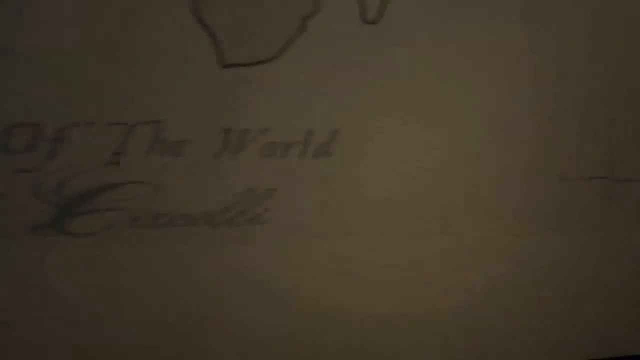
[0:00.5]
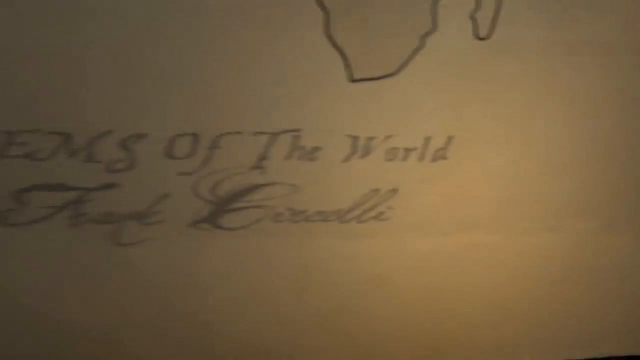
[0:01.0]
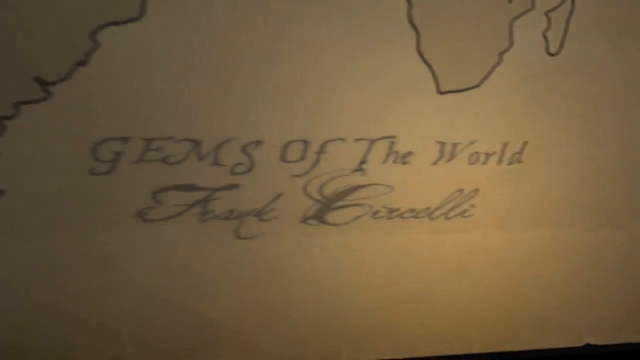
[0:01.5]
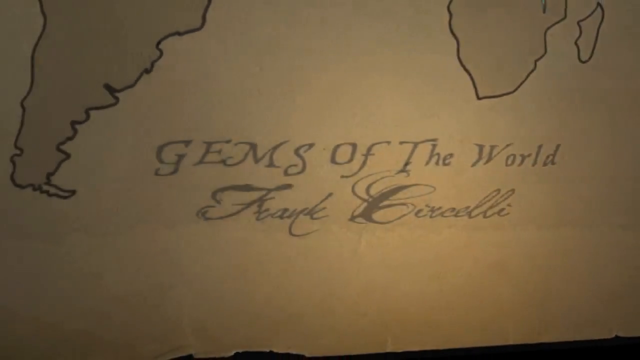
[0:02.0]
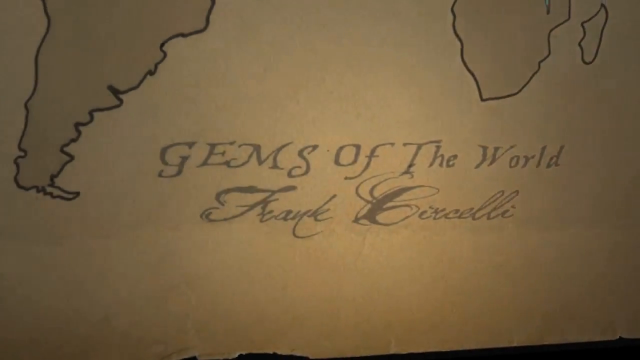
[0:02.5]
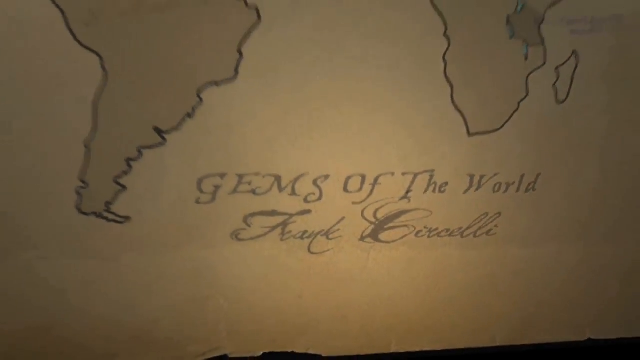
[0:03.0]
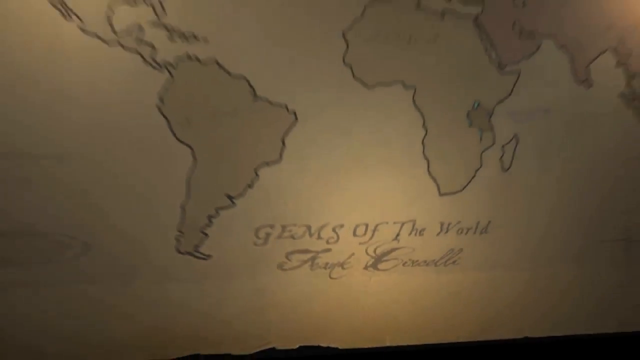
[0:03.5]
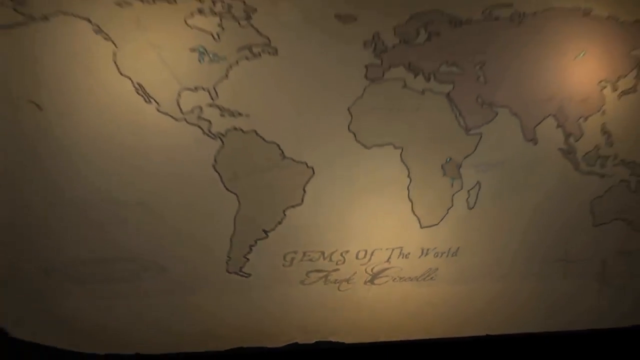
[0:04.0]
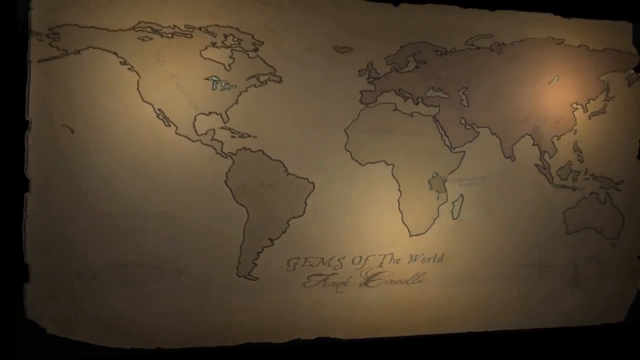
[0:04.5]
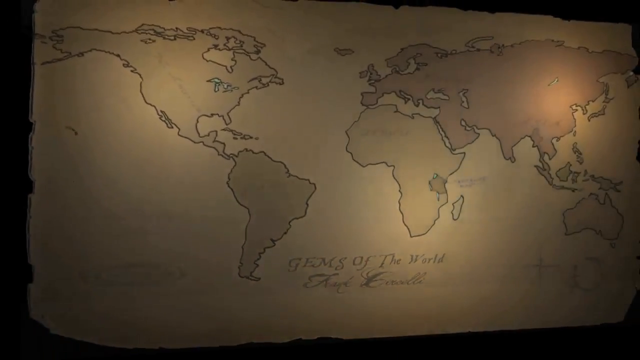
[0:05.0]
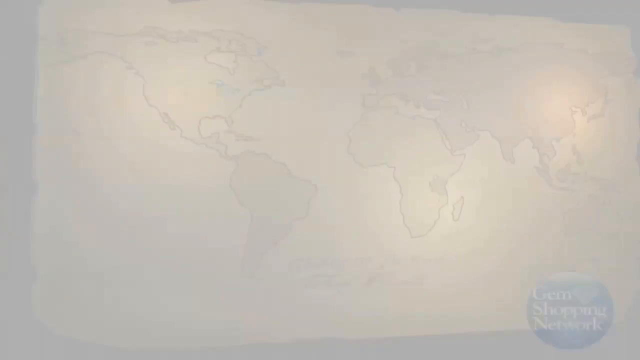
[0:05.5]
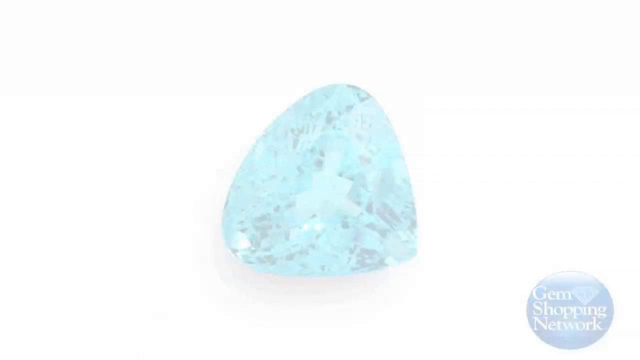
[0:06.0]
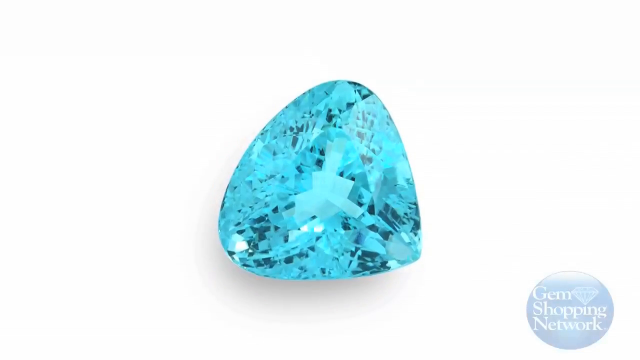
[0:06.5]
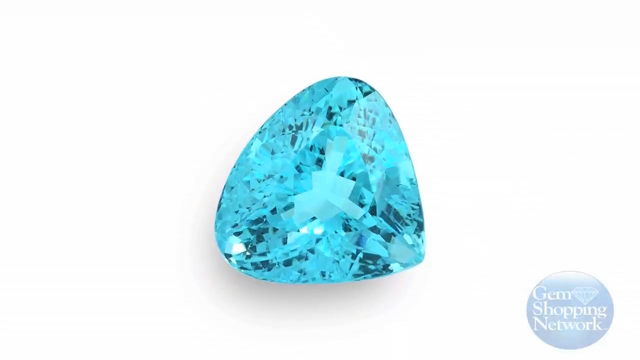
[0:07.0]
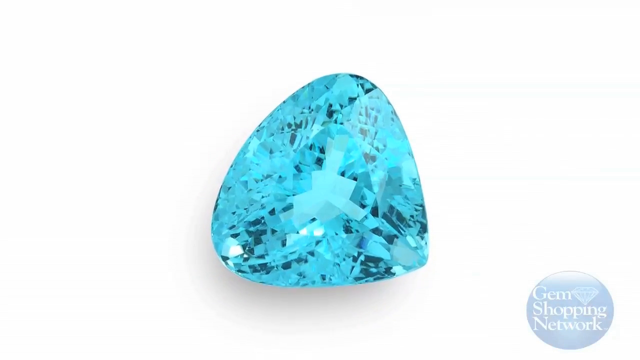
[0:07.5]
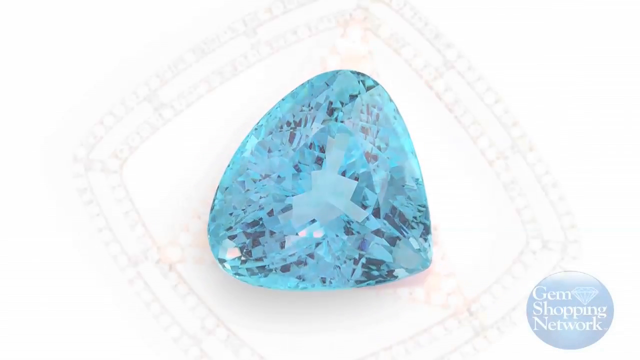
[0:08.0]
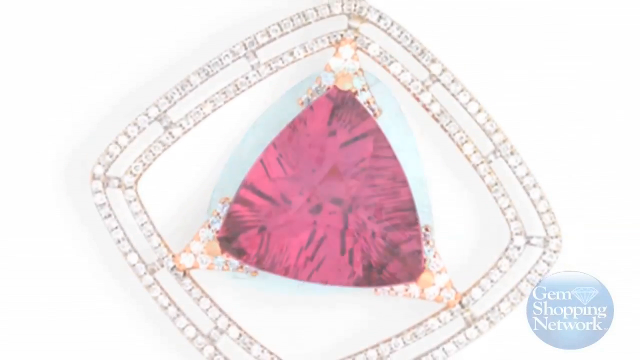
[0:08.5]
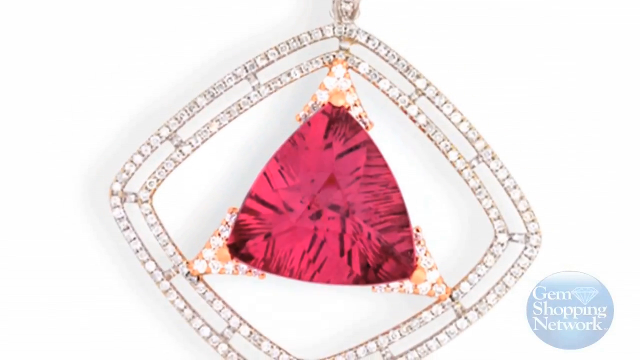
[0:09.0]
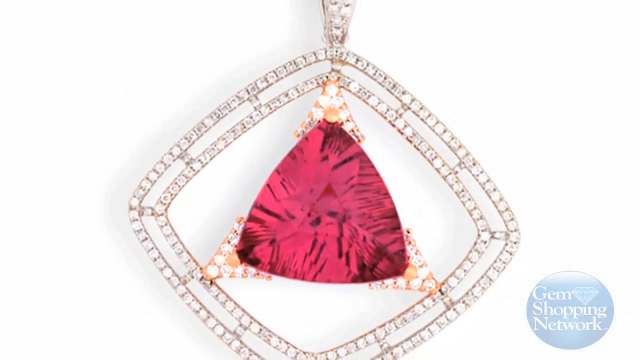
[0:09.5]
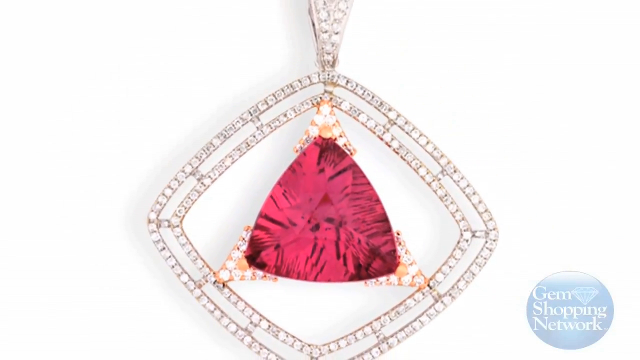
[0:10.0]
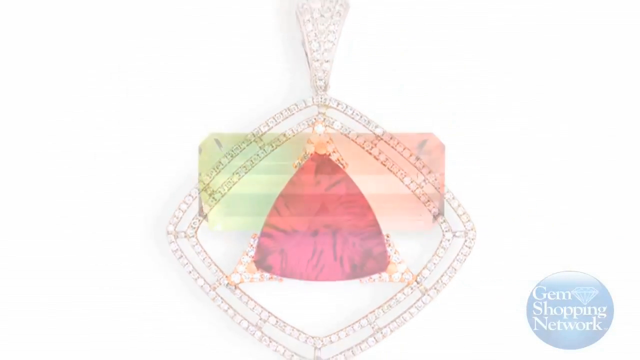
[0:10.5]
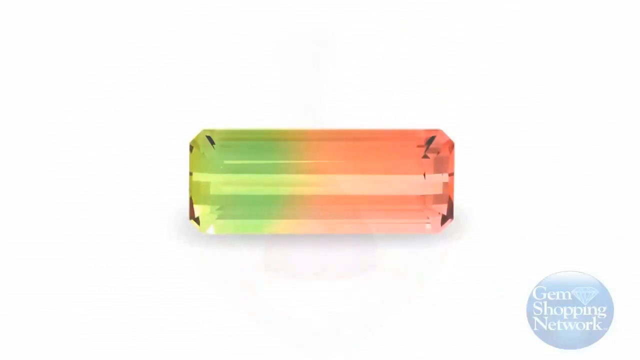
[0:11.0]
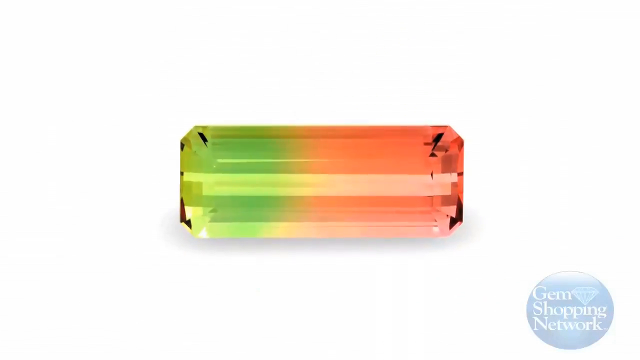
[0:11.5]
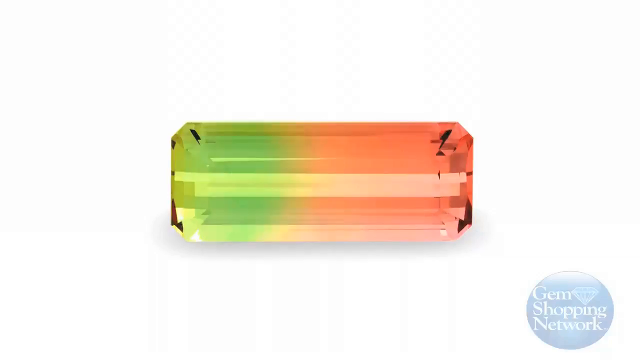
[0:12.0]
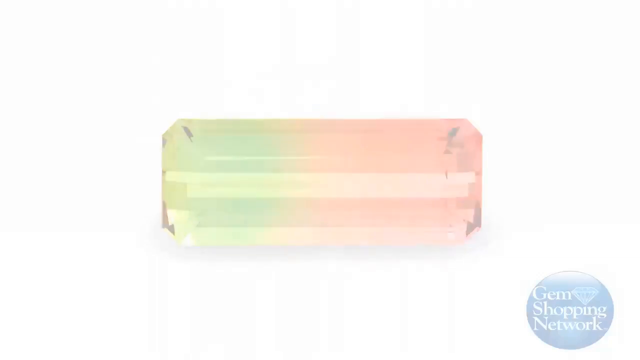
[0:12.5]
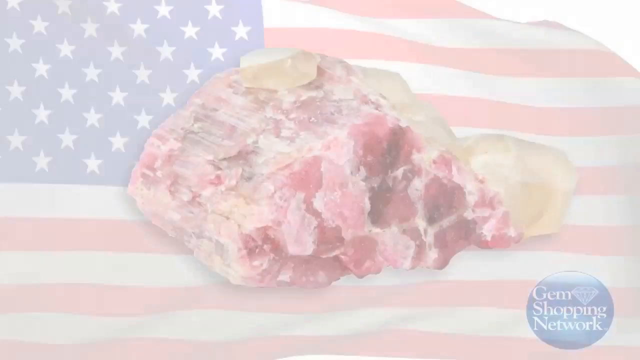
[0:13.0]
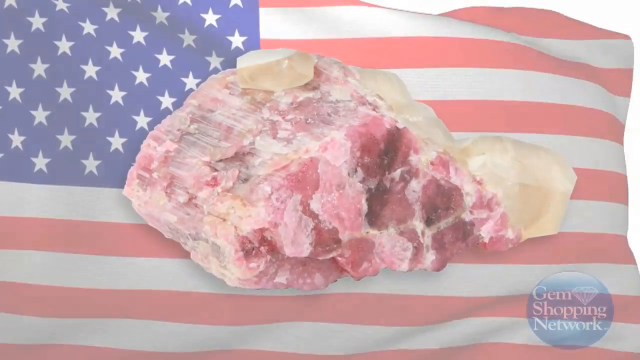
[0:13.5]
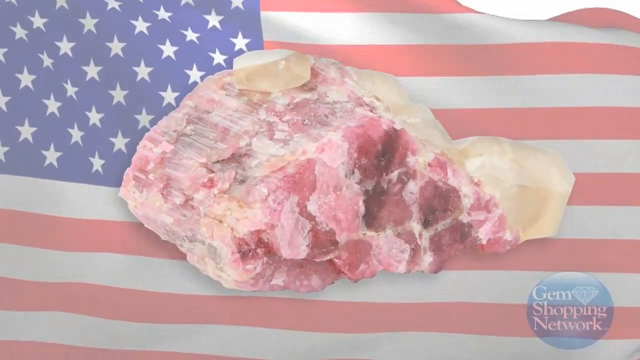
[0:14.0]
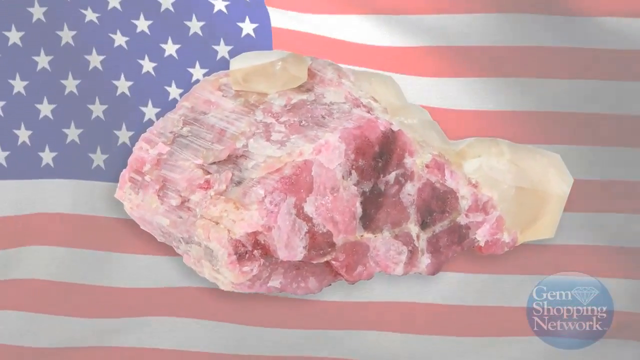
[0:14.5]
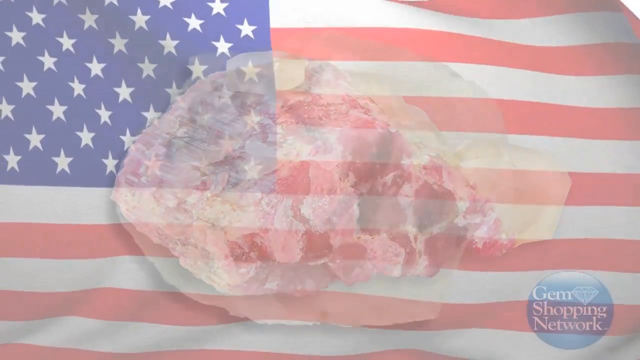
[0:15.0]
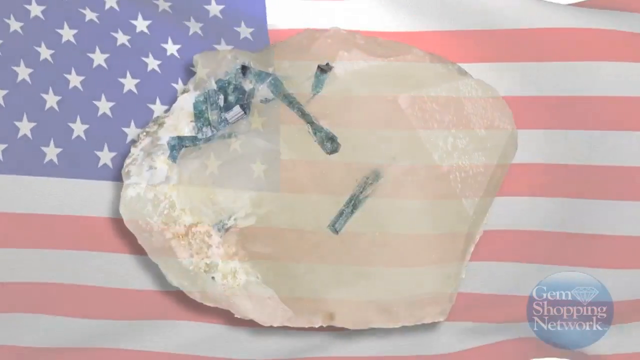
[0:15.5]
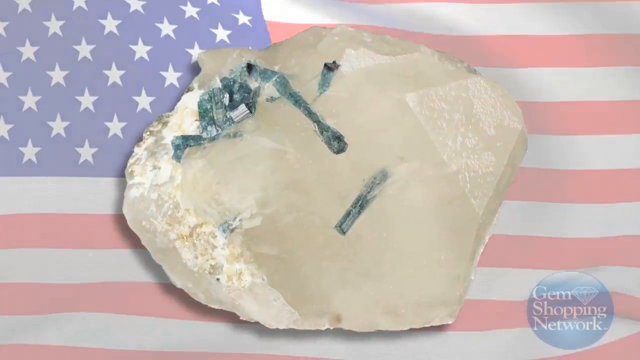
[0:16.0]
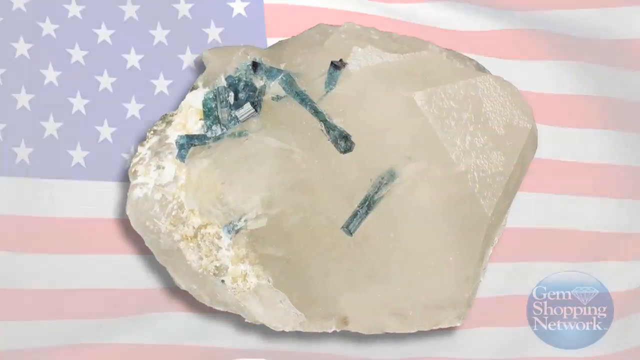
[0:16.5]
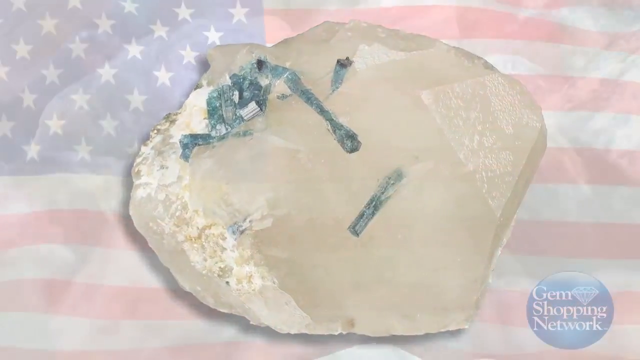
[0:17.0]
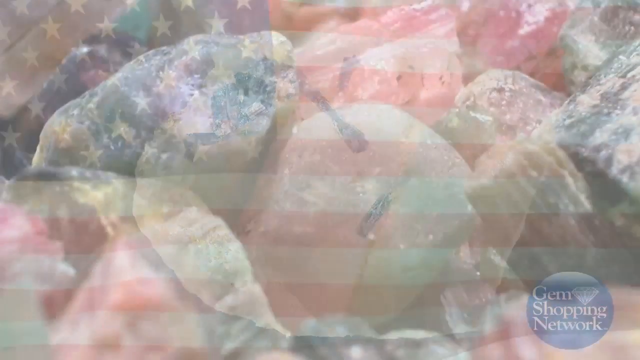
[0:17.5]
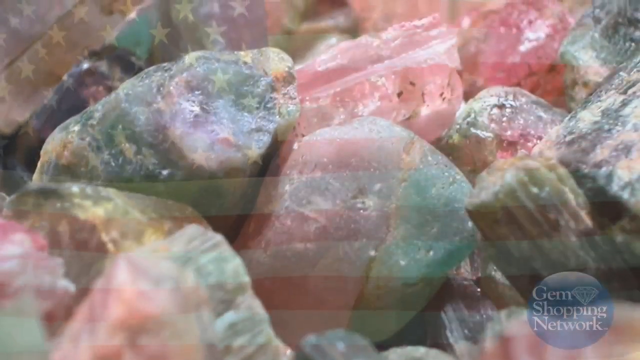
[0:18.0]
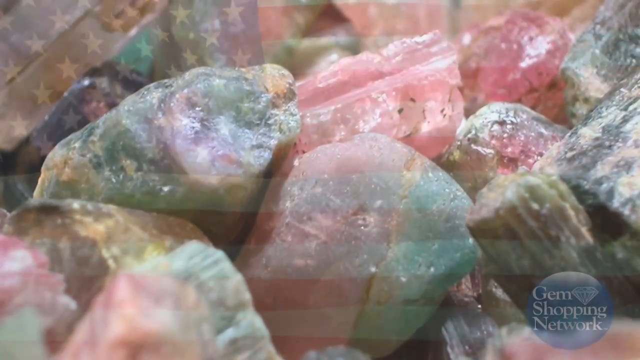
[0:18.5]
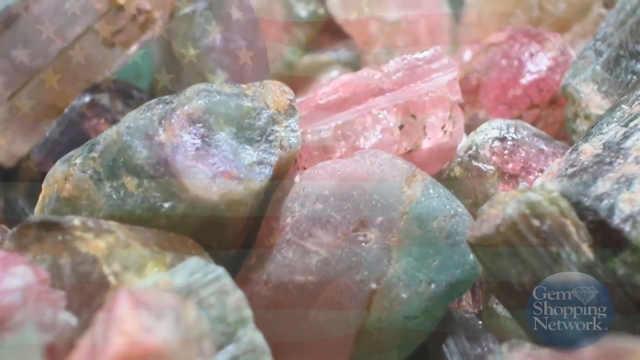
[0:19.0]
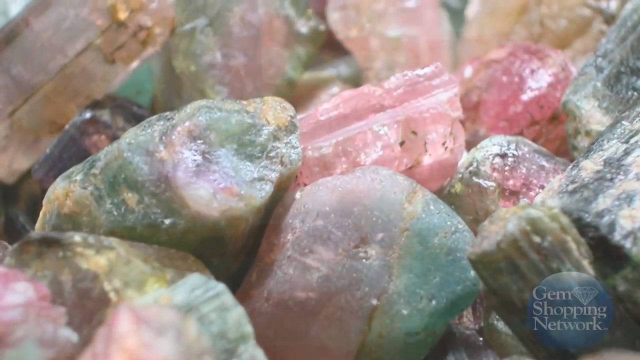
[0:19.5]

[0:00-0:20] The video is about gemstones of the world, in a range of colors. A blue stone appears first, followed by a red one set in diamonds; these two are finished. A third finished stone is green on one end and kind of a watermelon color on the other. The video then switches to unfinished stones: what look like large chunks of stone in front of the American flag, possibly rose quartz or maybe regular quartz. The camera pans up over a large amount of unfinished stones ranging in color from gray to pink to kind of an emerald color, though probably not emeralds, maybe more of a jade color, along with amber colors. The video then returns to the main page, which says "gemstones of the world."